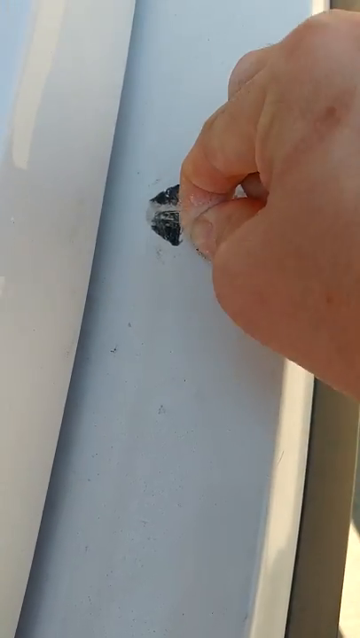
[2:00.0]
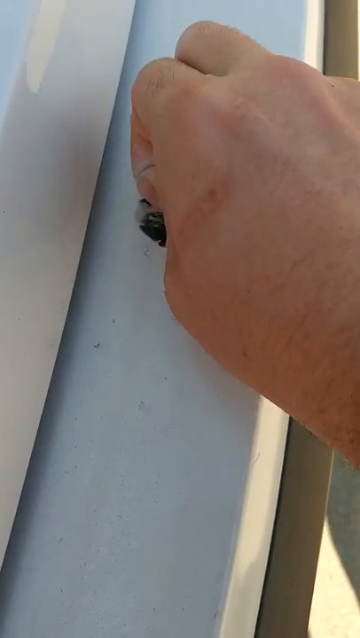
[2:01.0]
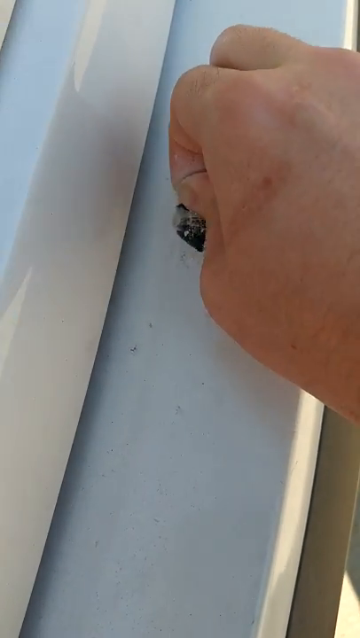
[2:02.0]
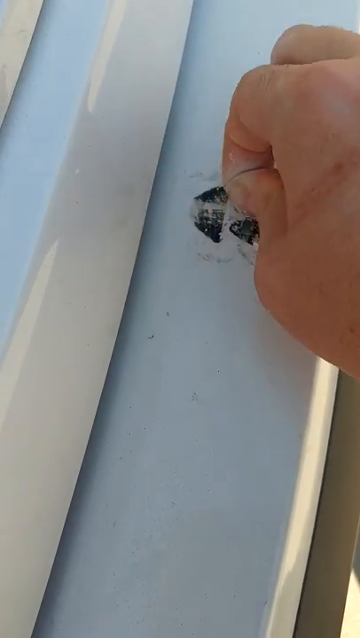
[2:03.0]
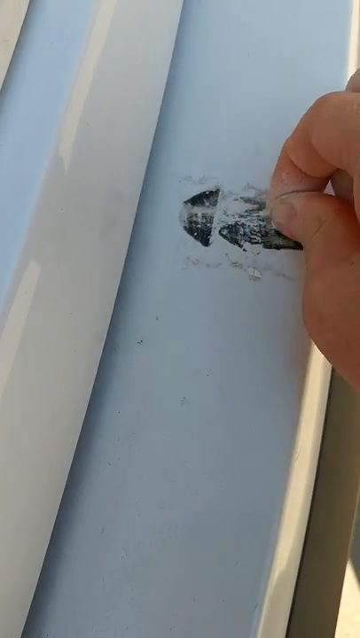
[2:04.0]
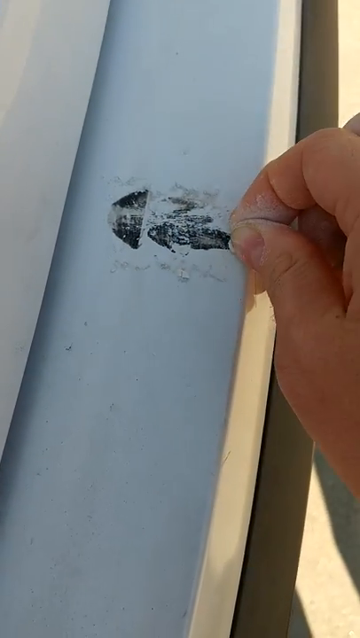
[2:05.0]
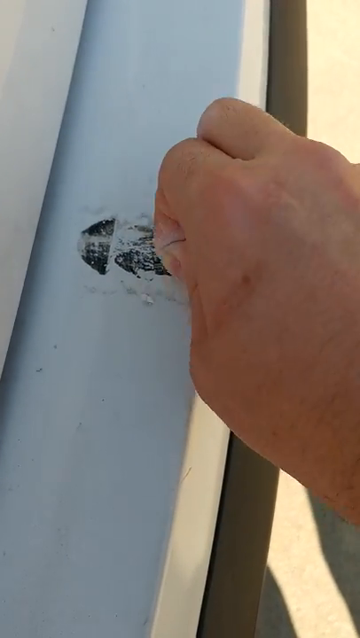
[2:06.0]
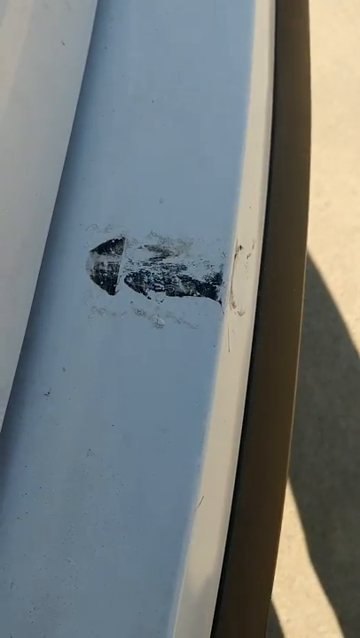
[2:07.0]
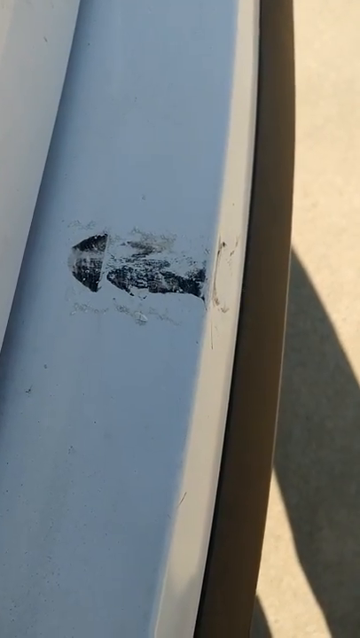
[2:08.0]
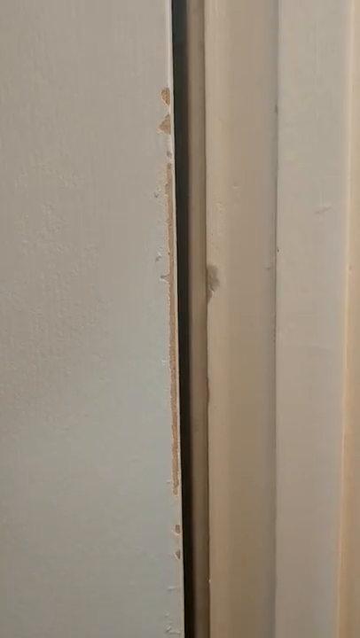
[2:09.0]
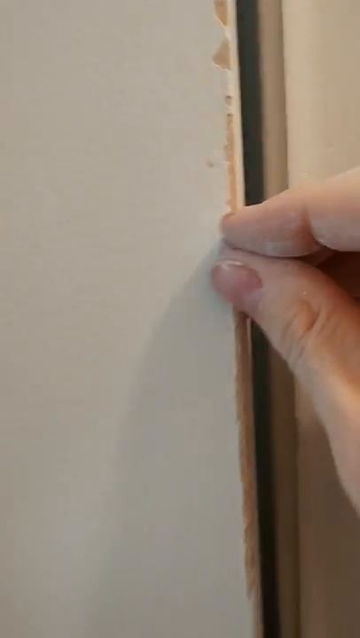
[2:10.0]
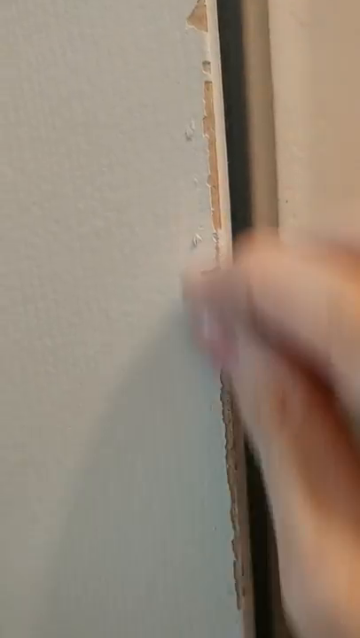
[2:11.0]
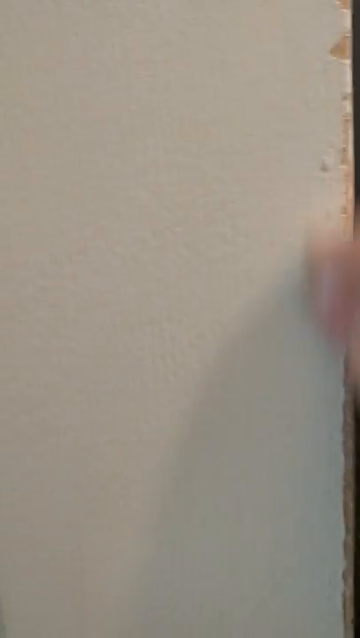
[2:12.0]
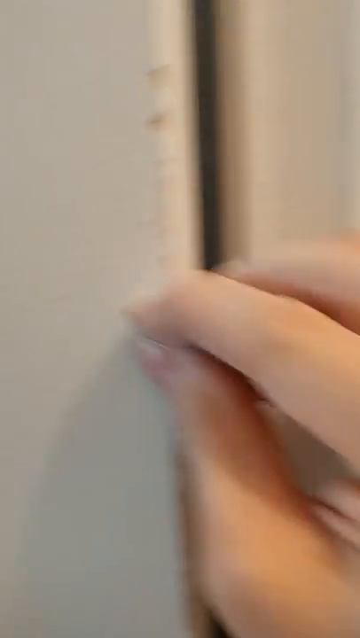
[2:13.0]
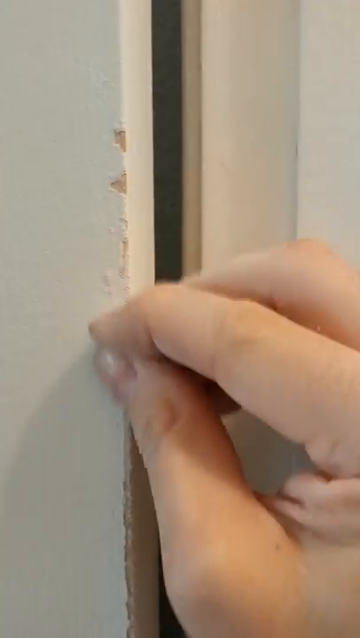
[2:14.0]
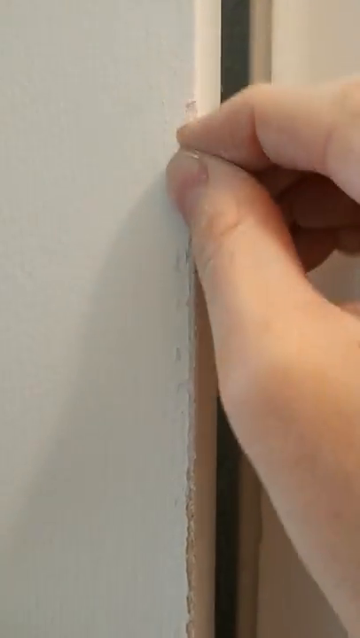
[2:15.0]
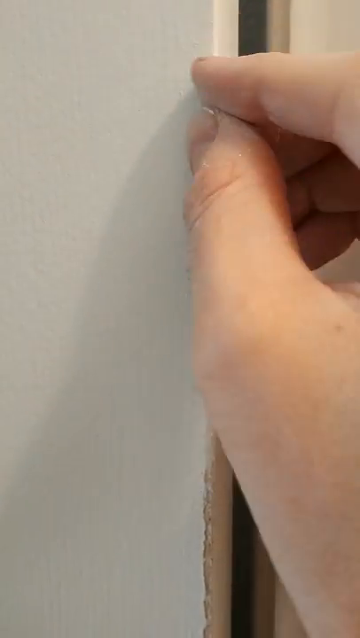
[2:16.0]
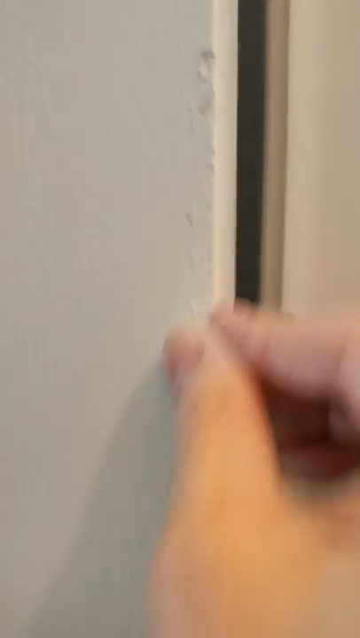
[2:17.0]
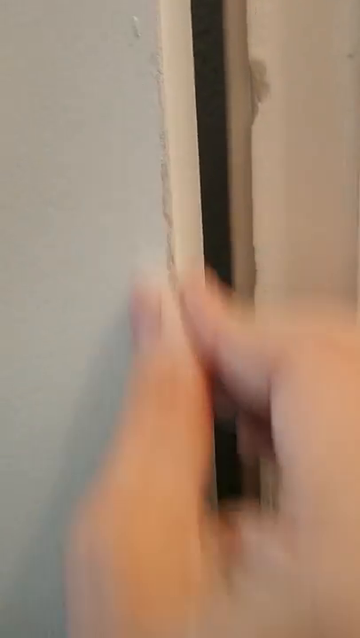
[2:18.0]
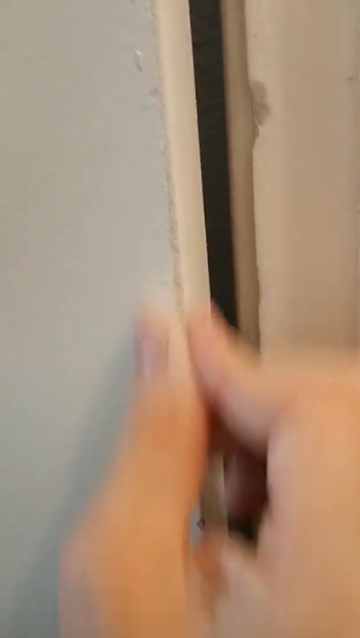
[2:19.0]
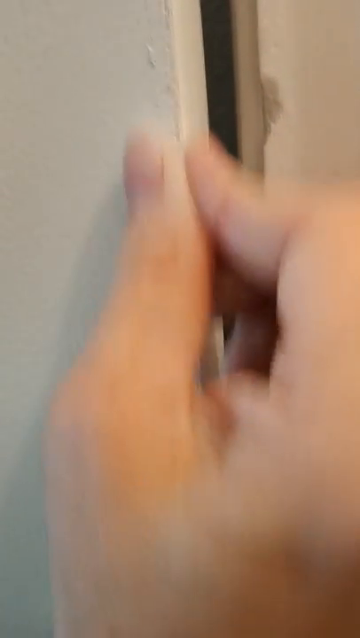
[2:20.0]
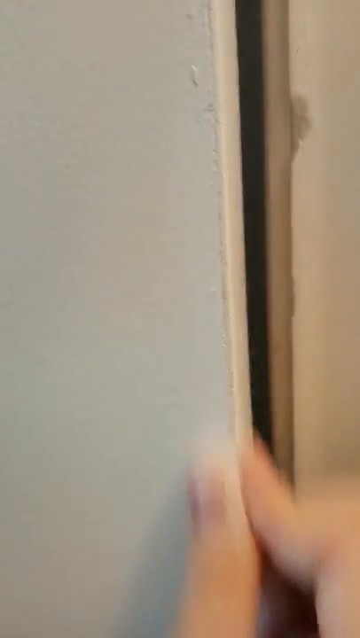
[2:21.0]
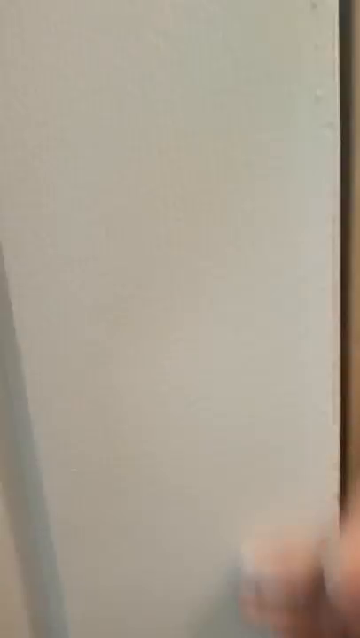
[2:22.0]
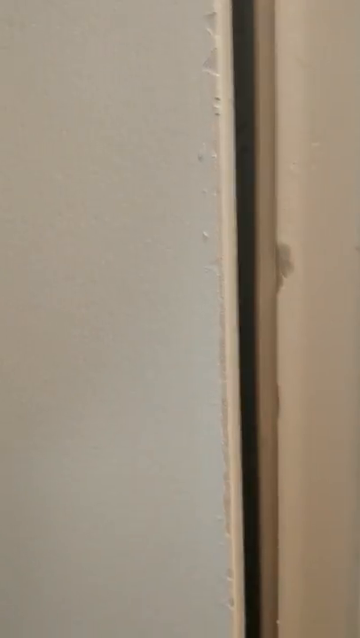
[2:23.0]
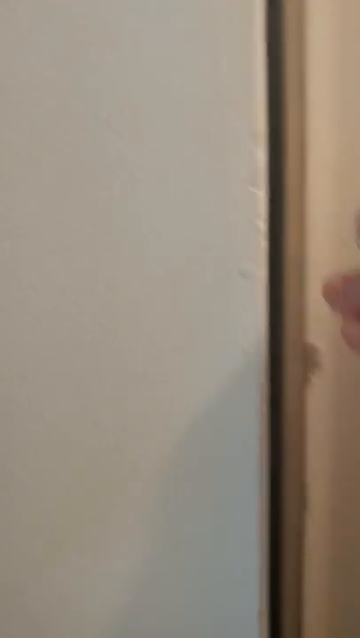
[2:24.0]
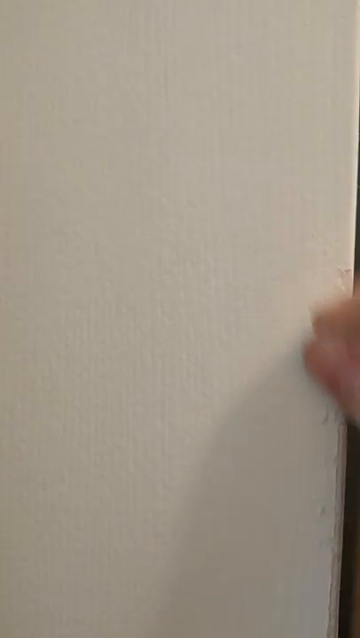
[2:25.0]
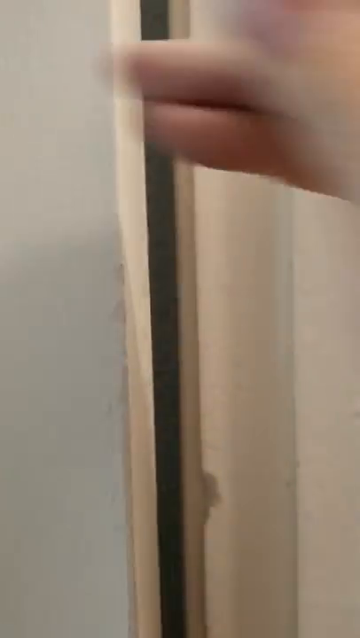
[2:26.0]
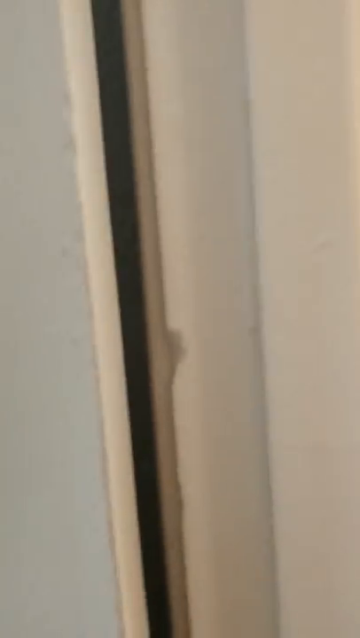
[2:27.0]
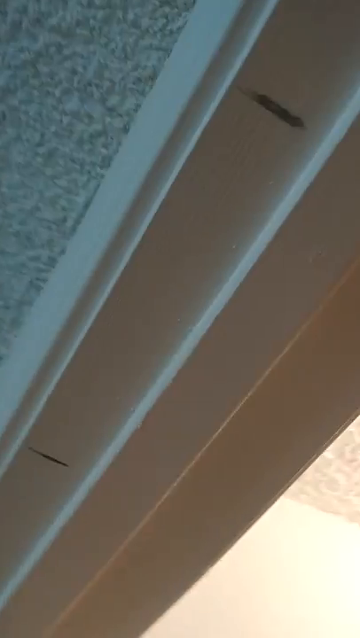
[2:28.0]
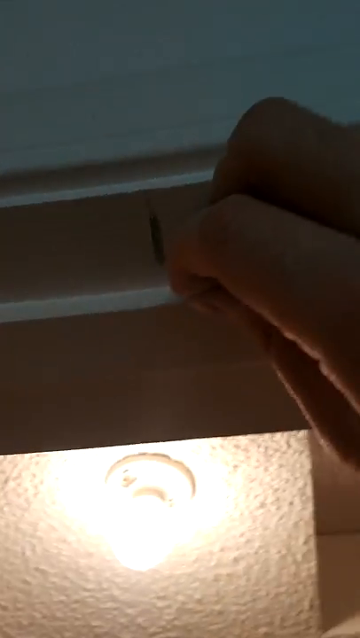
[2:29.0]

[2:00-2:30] A man holds a piece of chalk and appears to be scrubbing at a paint or tar stain on a door seal or window seal. At first only a close-up of his hand is visible as he scrubs back and forth at a black stain on the windowsill, leaving a few lines marked in it. The scene changes, and he moves around to the edge of the door, working along it wherever he finds a spot that looks like the paint has been removed.